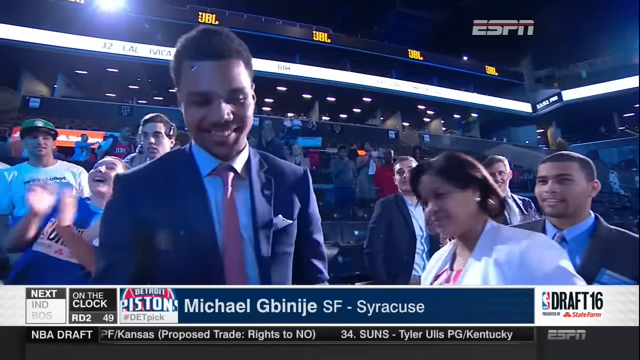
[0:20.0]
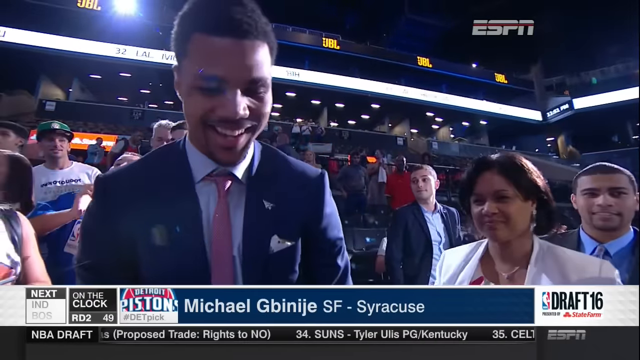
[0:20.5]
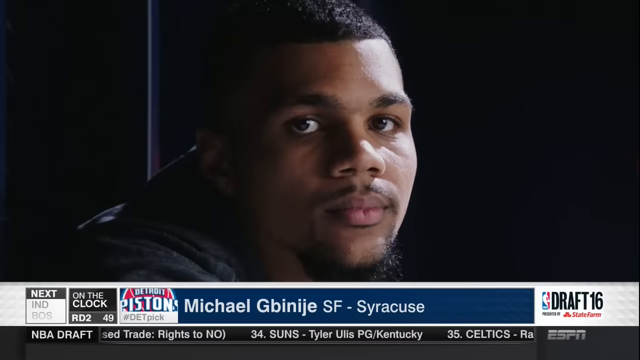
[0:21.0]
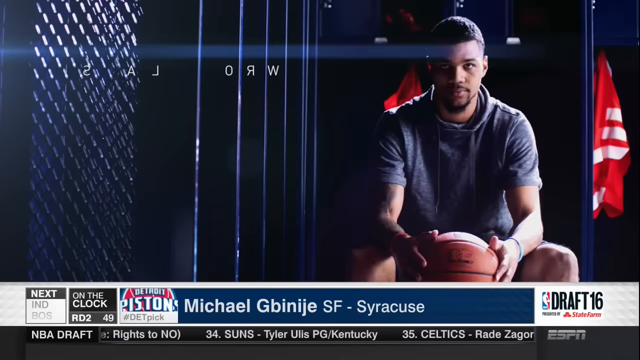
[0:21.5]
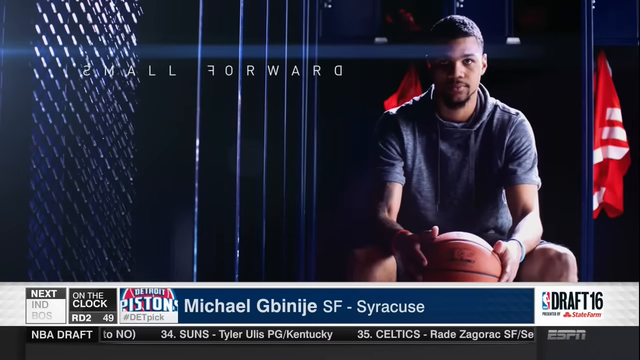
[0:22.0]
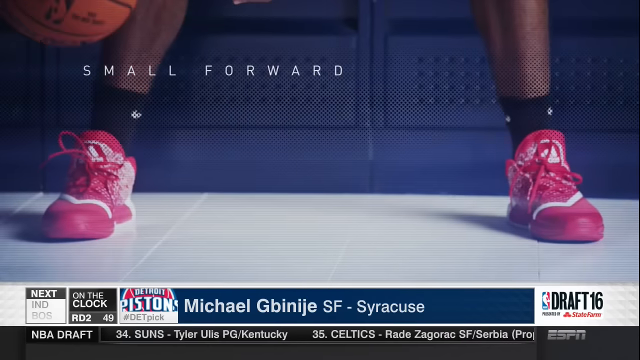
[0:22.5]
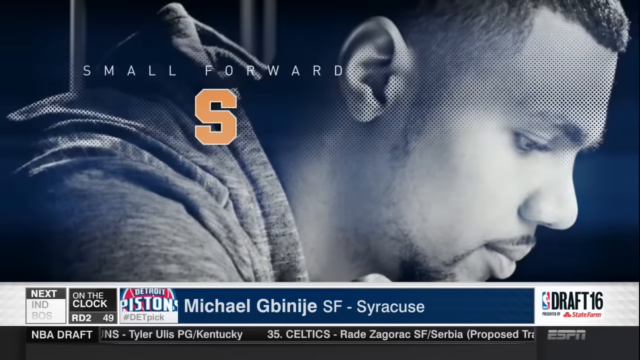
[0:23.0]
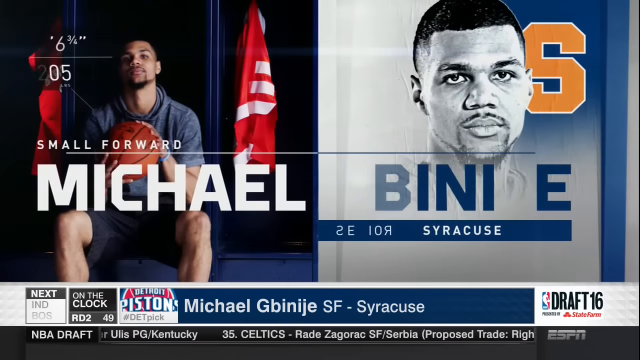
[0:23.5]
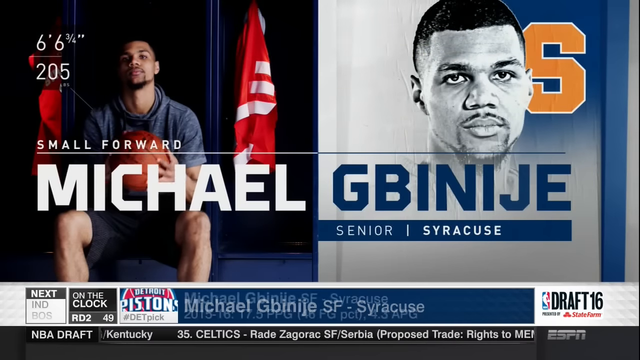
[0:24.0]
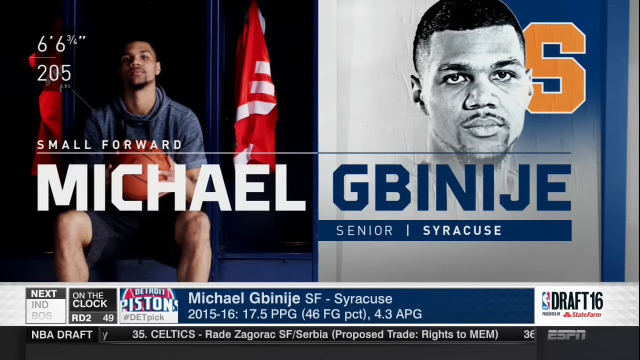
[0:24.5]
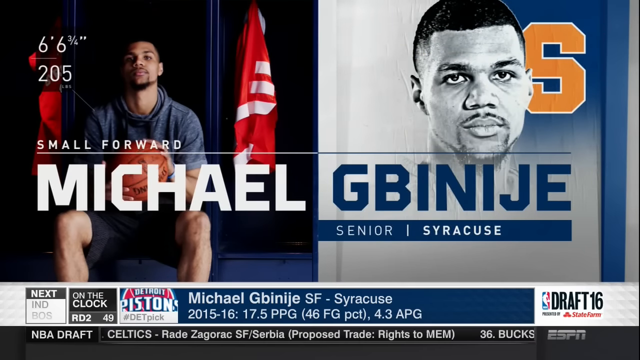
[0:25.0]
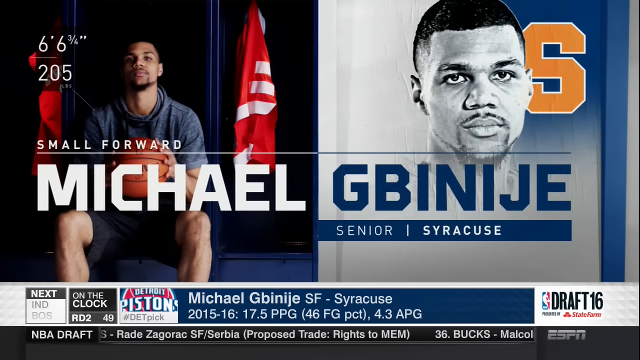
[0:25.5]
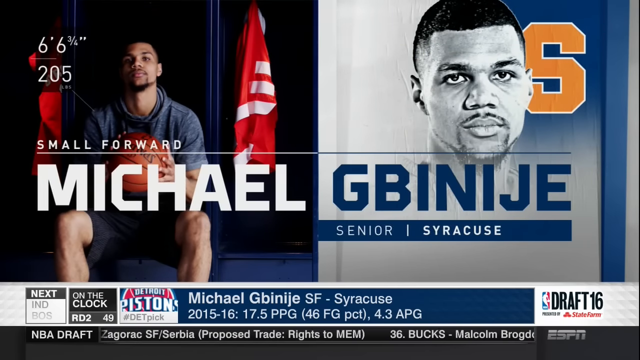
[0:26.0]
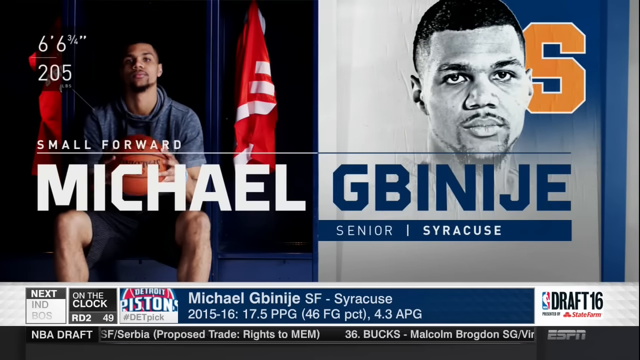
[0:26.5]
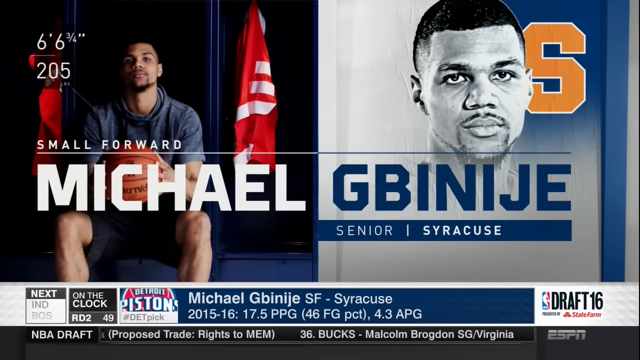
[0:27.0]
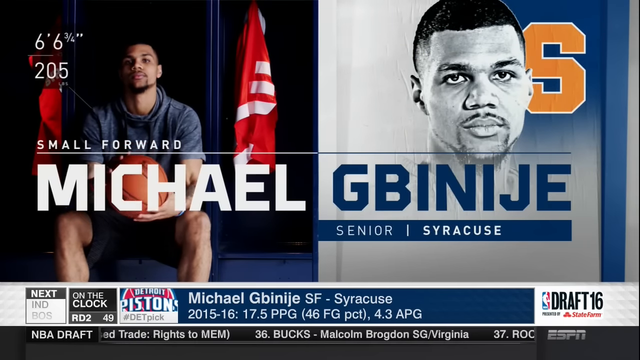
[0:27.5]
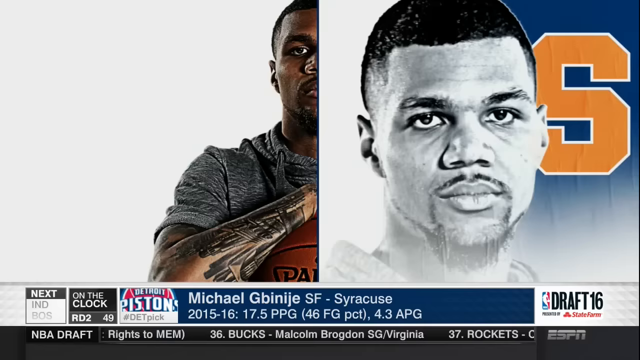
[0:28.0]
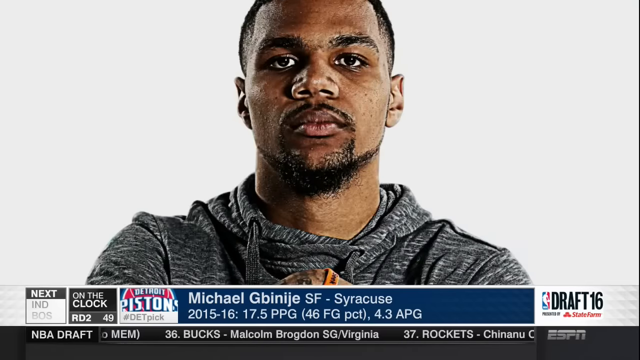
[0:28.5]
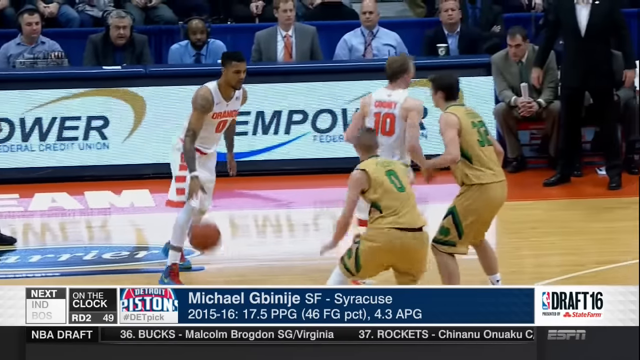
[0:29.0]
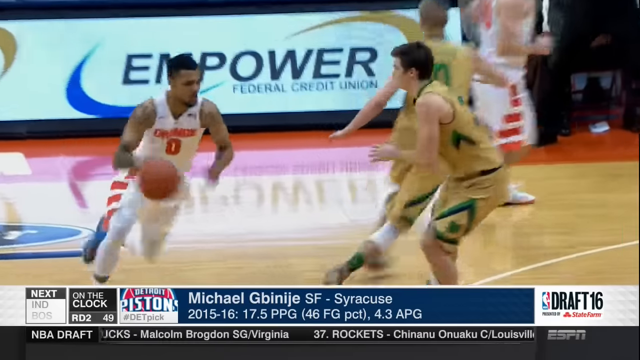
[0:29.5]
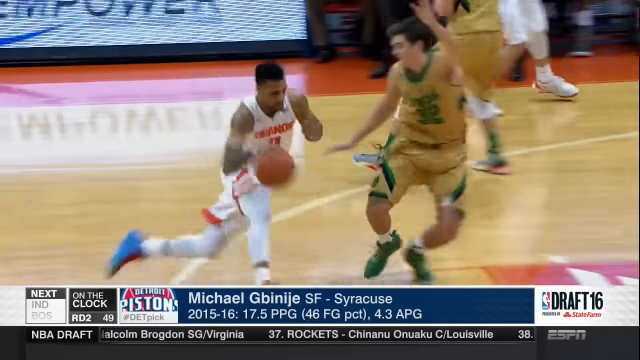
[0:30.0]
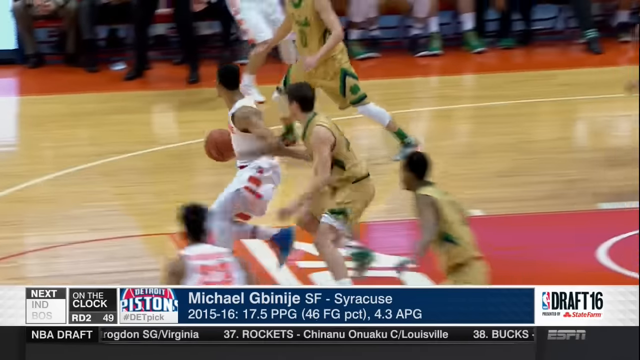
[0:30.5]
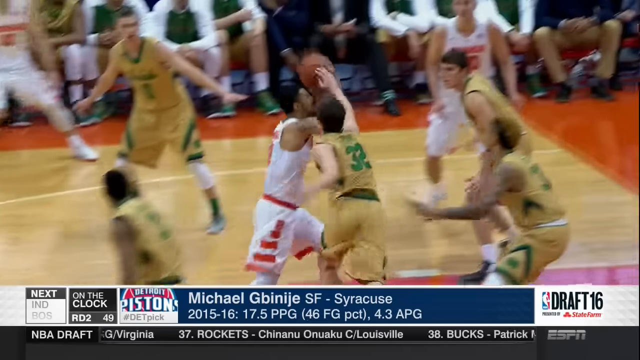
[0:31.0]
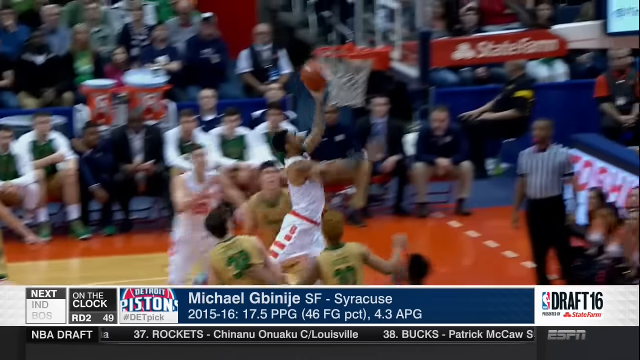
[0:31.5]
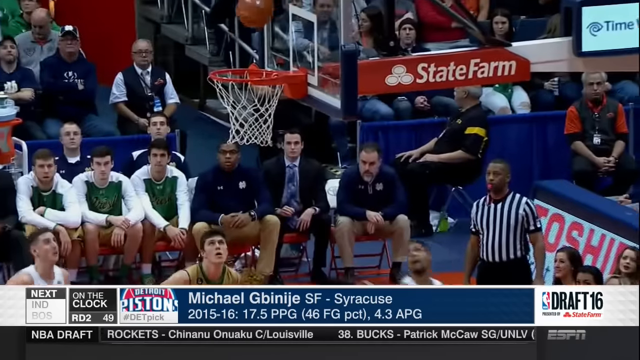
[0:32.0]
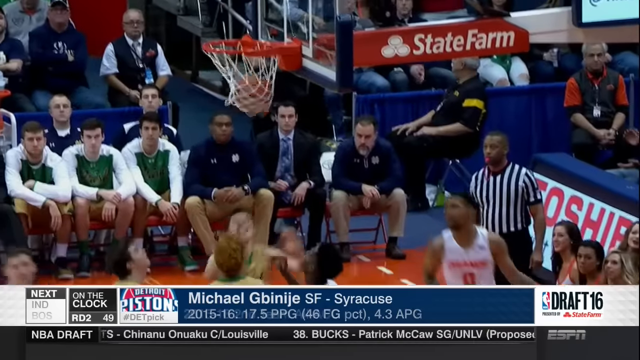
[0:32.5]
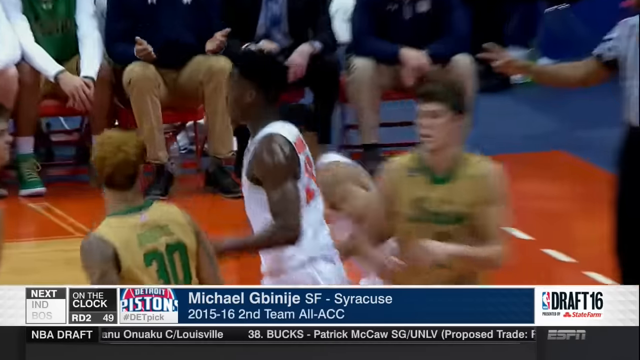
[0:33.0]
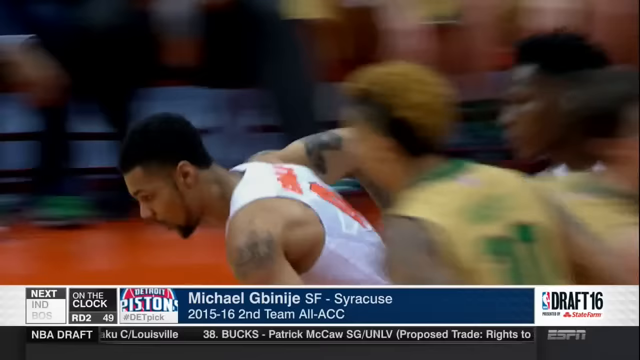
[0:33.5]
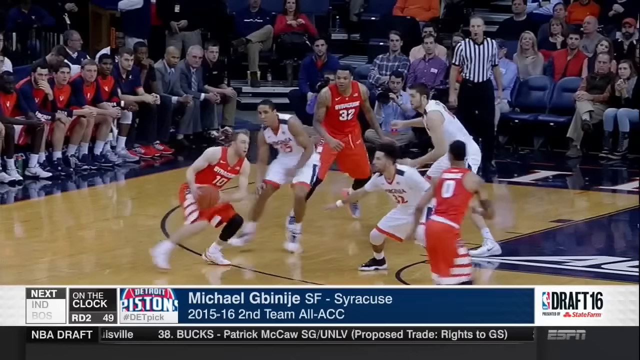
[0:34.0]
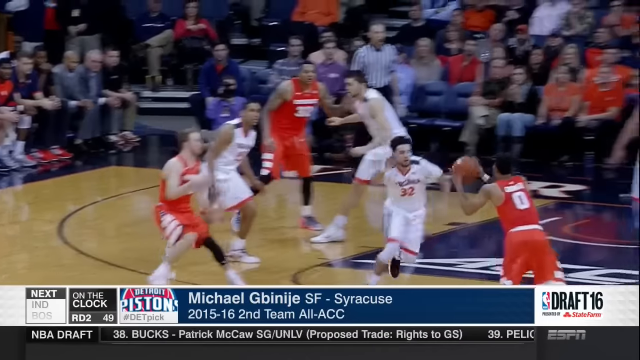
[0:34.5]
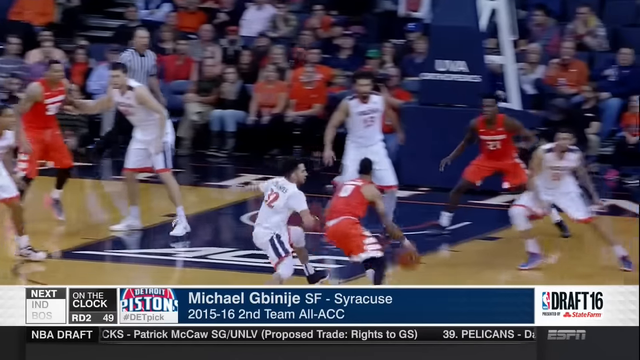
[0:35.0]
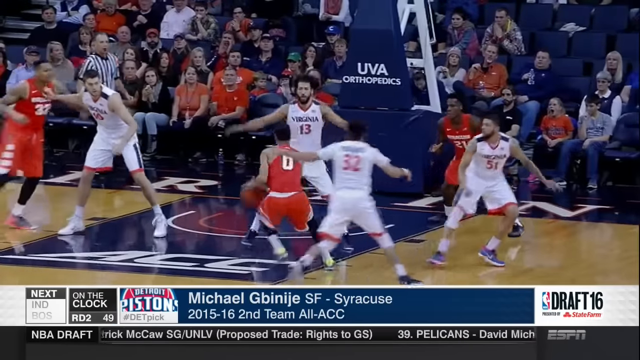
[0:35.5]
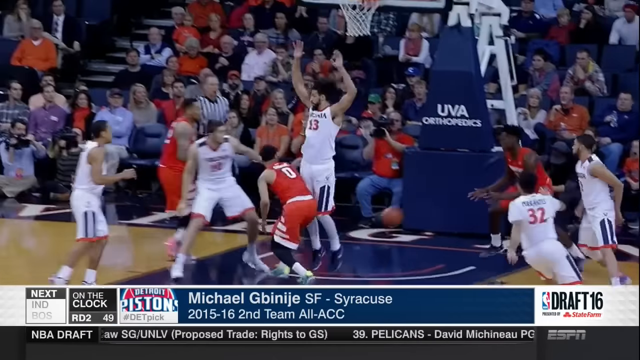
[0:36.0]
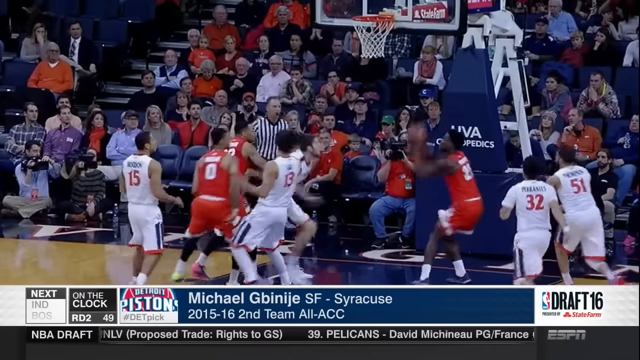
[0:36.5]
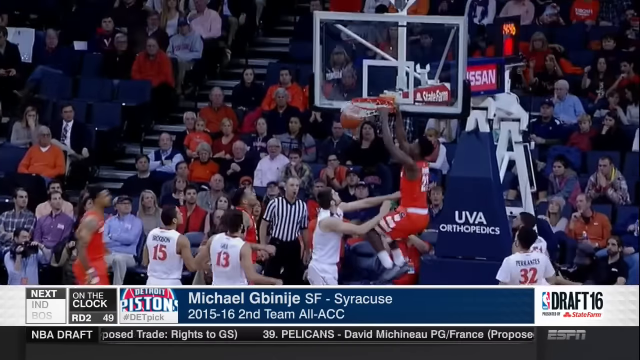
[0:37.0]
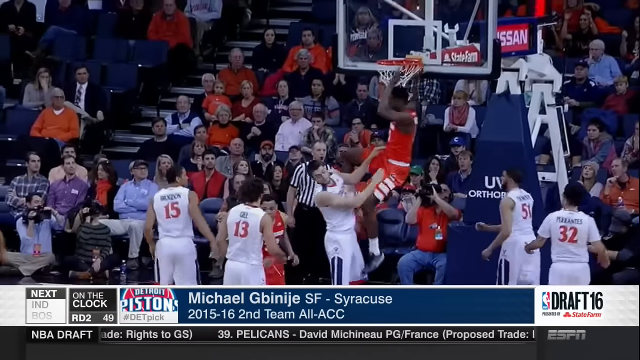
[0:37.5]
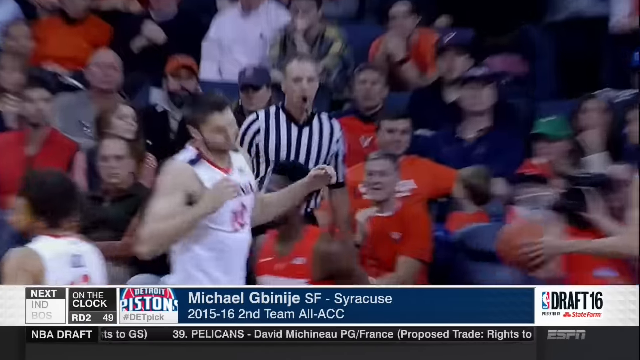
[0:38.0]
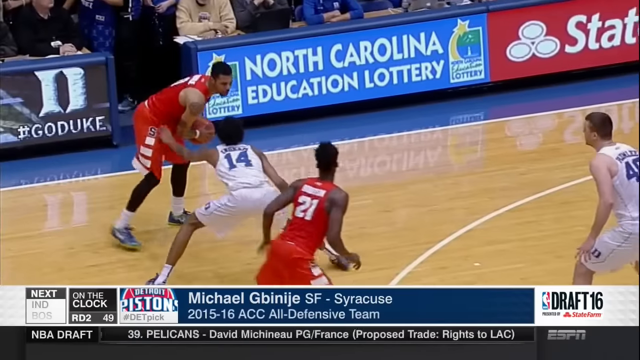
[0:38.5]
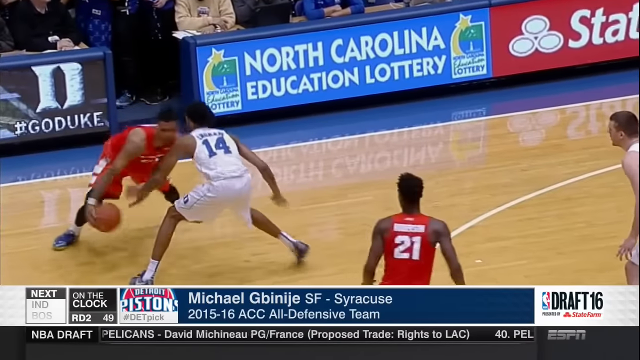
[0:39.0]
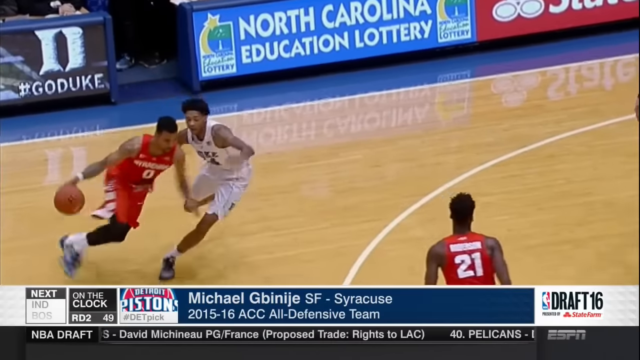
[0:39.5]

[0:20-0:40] "ESPN" is in the upper right corner, and the NBA symbol is in the bottom right corner with "draft" in black and "16". Next to it at the bottom, "on the clock" appears with "Detroit Pistons" in red, white and blue. The selected player is Michael, last name G-B-I-N-I-J-E, with "SF". He is smiling and is shown as a small forward, with an orange S outlined in white under it. A side profile shows his right side; he wears a dark hoodie, but the image appears gray and white, so its actual color is unclear. He sits holding a basketball and rolls it between his hands. The graphics show he is a senior, 6'6¾" tall and 205 pounds. Then he is shown playing, apparently wearing number zero, scoring against different teams and passing the ball to a teammate.